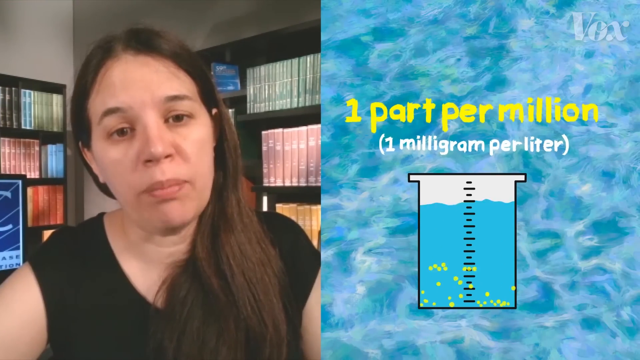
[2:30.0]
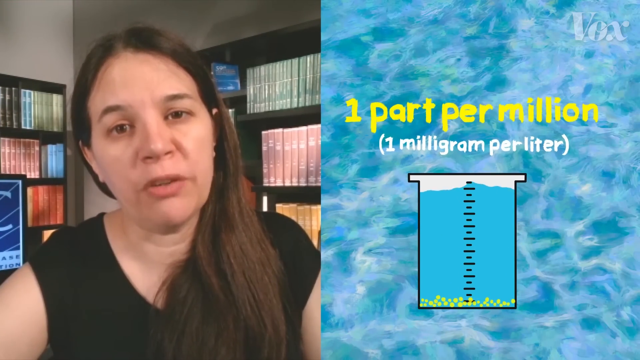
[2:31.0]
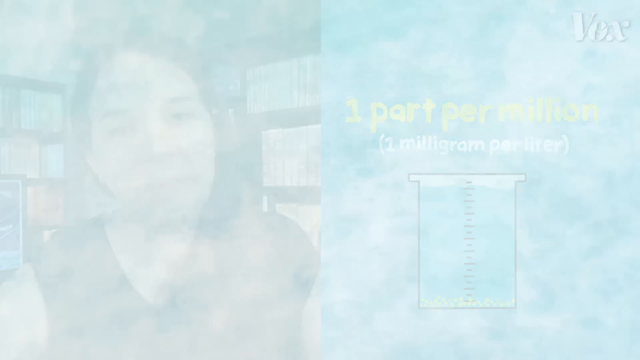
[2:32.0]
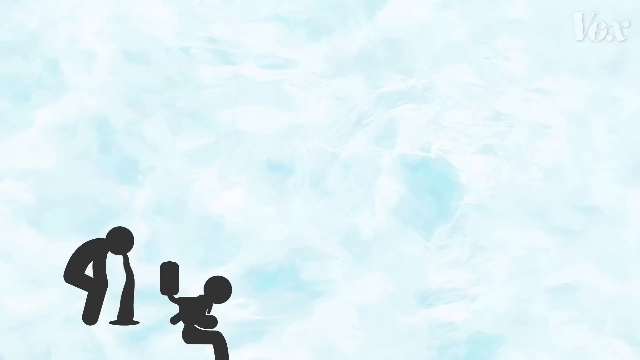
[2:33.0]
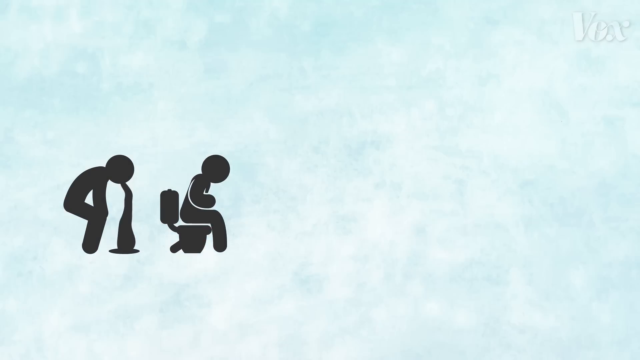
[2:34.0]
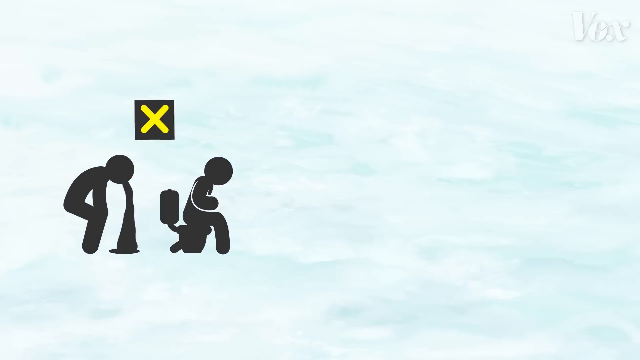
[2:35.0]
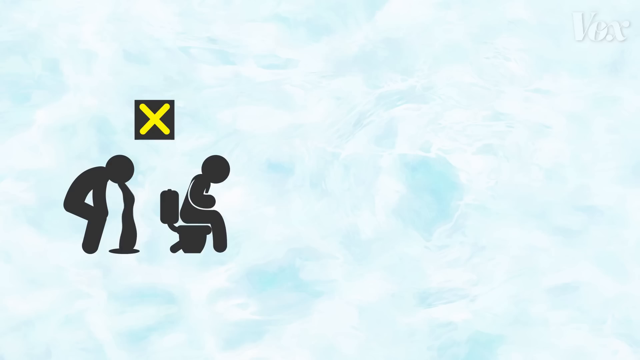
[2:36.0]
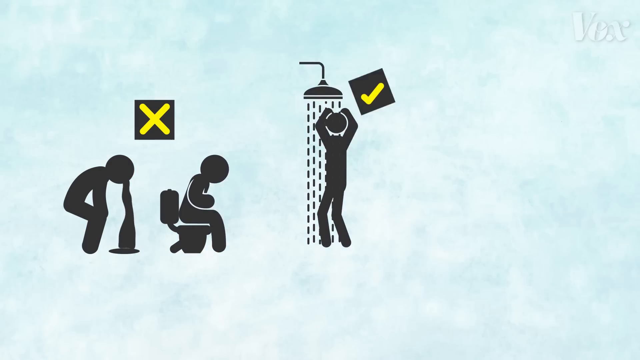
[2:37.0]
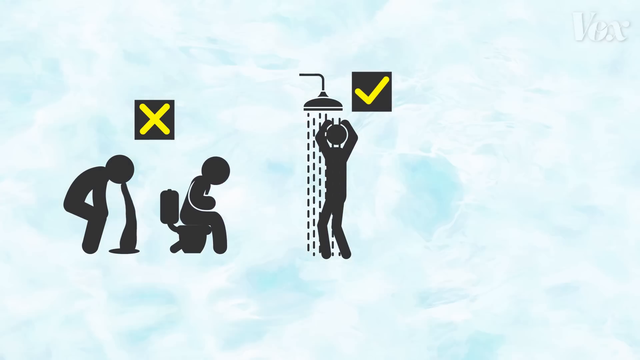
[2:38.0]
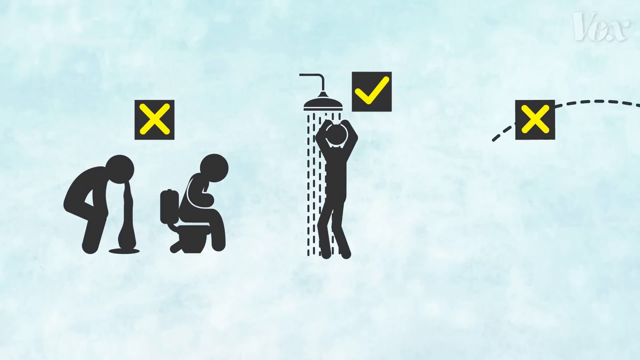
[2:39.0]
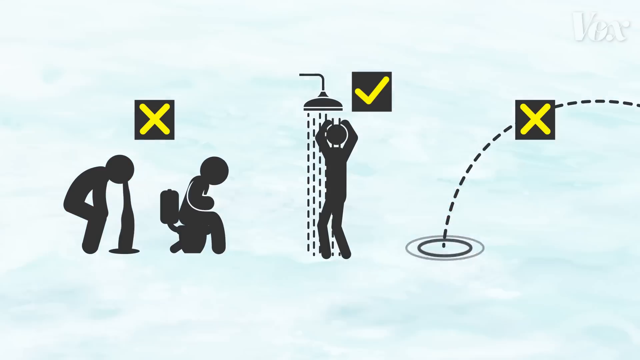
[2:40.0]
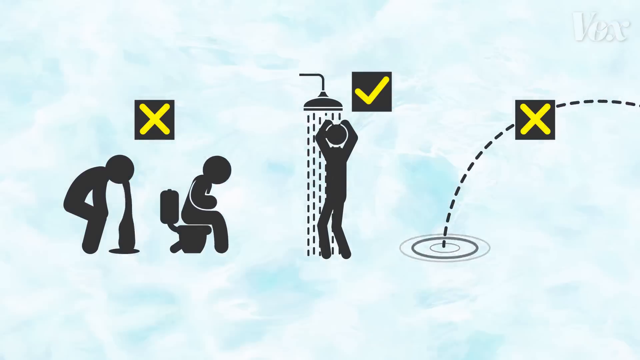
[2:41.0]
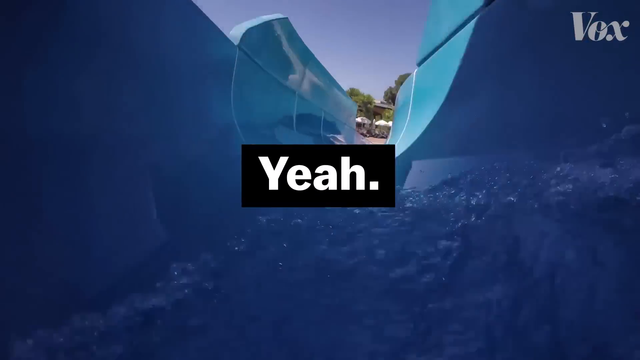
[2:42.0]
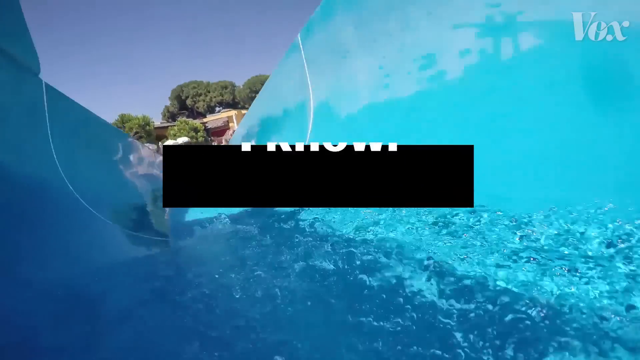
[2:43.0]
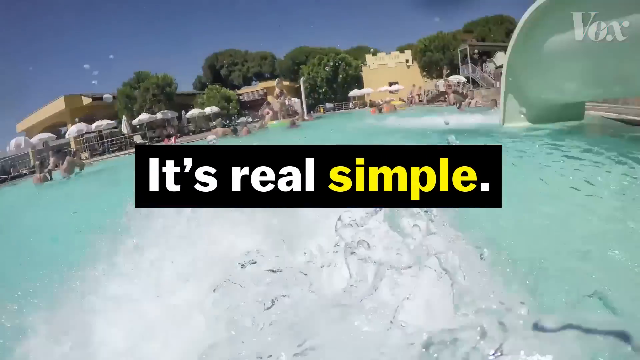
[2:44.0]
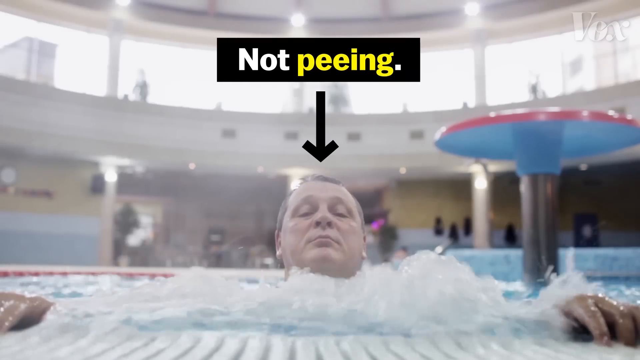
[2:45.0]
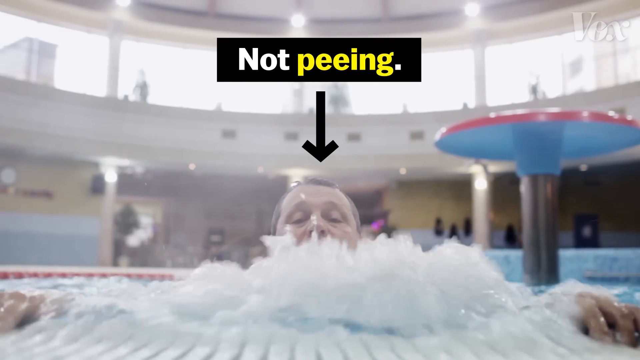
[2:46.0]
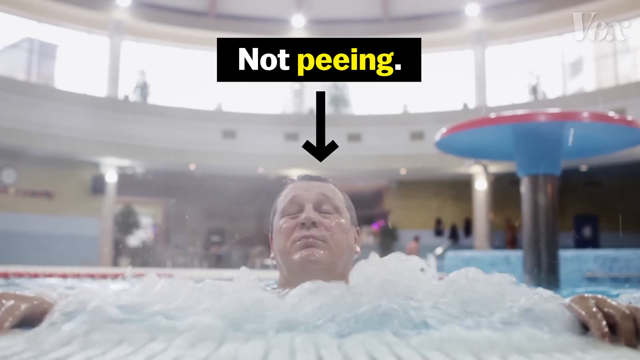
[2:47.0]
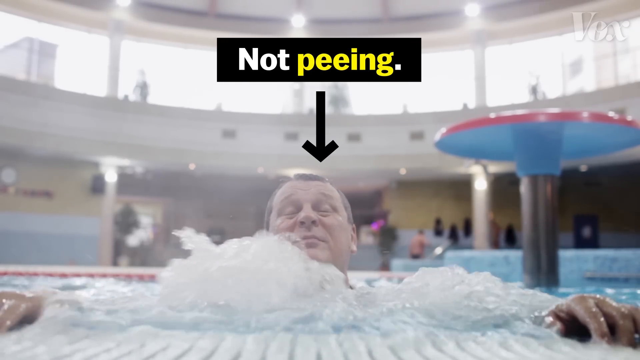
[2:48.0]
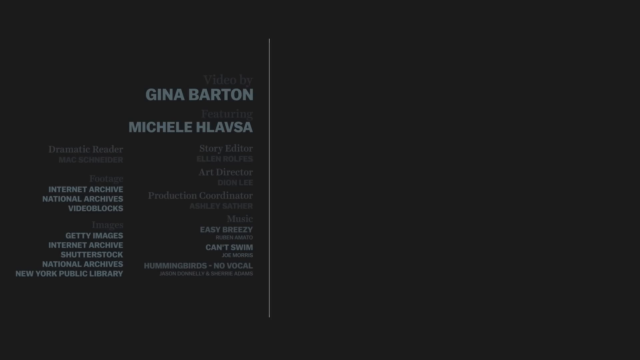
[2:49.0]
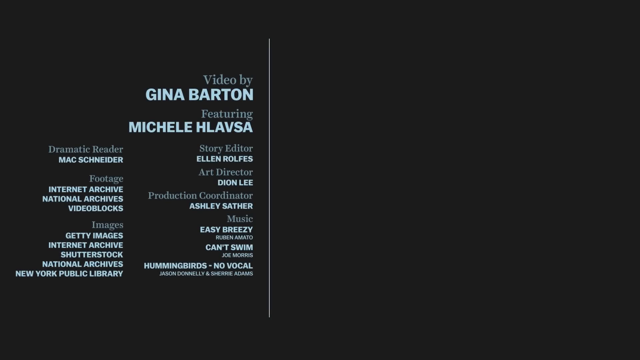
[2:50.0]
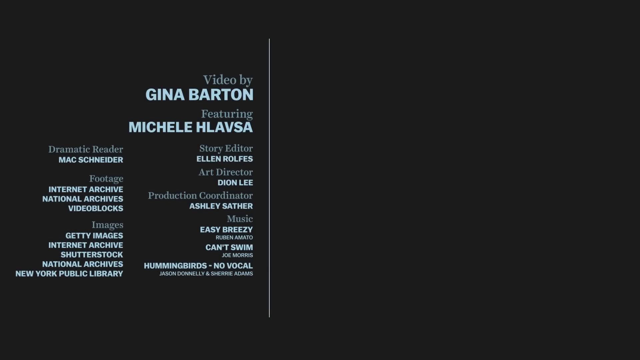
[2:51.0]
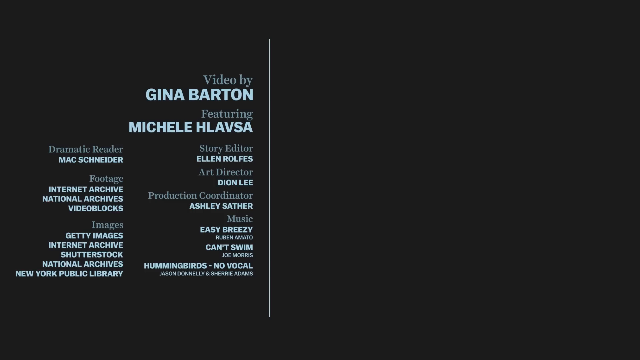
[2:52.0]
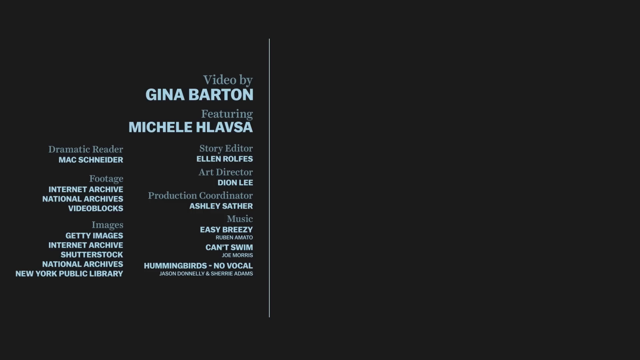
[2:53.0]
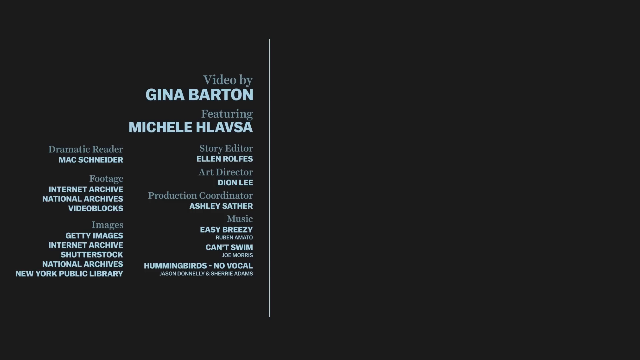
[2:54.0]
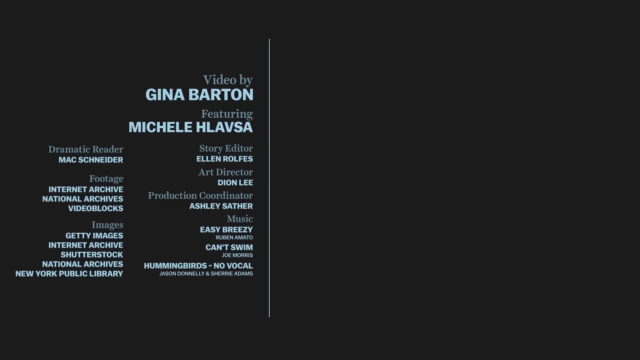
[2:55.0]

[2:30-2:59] The woman from the CDC is on the left, speaking toward the camera, and on the right is "one part per million one milligram per liter." A black silhouette of a person appears hunched over, apparently throwing up, and another person in black in front of them appears to be sitting on a toilet; right above them is a black square with a yellow X in it. Another silhouette appears in front of them of a person taking a shower, and right next to that person is a black box with a yellow check mark. Another silhouette looks almost like a raindrop or water going into a puddle, and a black box with a yellow X appears. Next, what appears to be someone comes down quickly on a winding water slide, with text including "it's real simple," and they come down into the water. A man is in the water with an arrow pointing to his head and the text "not peeing." Then credits appear on the left side listing the people in the video.